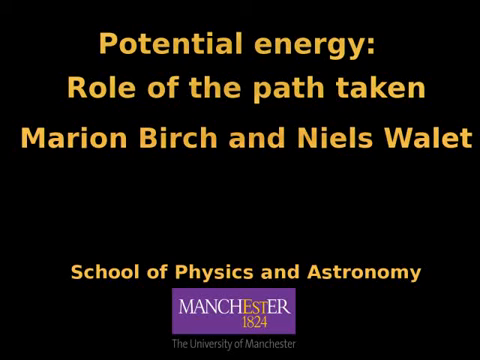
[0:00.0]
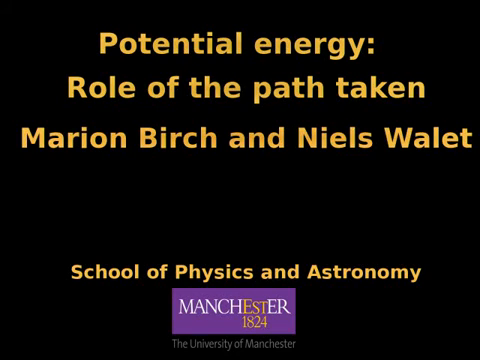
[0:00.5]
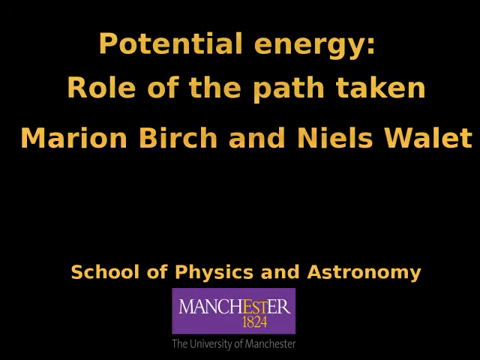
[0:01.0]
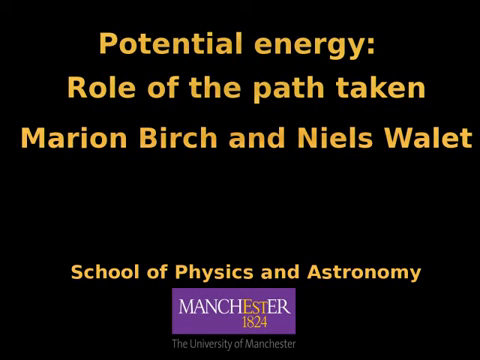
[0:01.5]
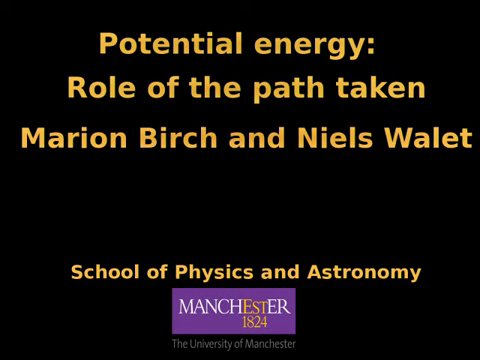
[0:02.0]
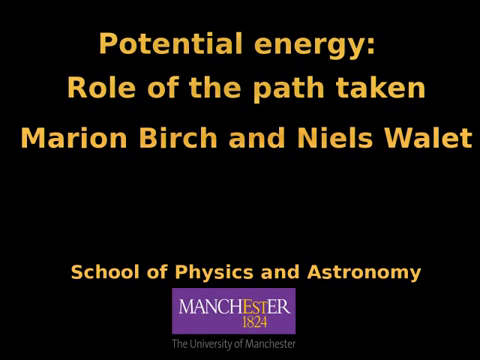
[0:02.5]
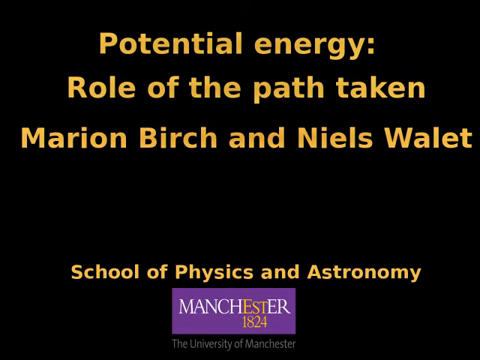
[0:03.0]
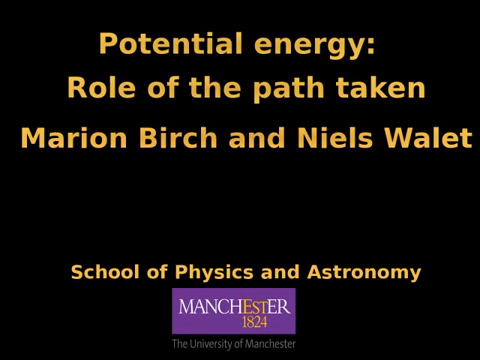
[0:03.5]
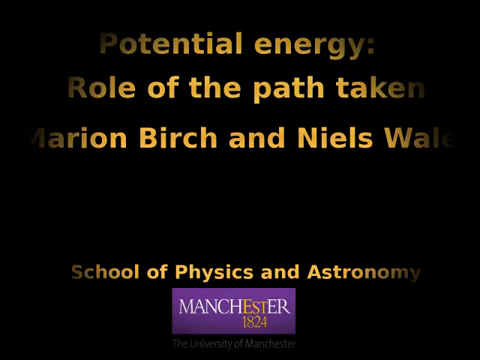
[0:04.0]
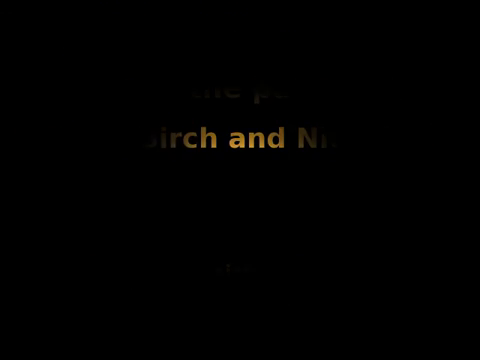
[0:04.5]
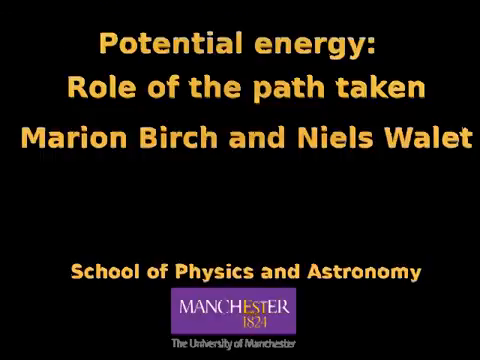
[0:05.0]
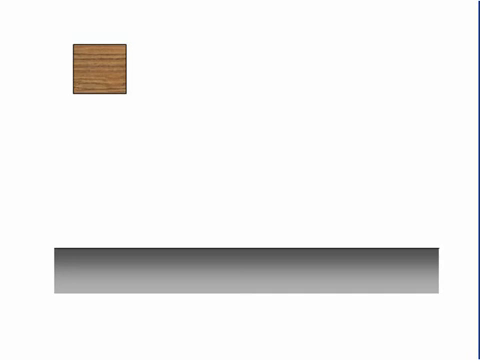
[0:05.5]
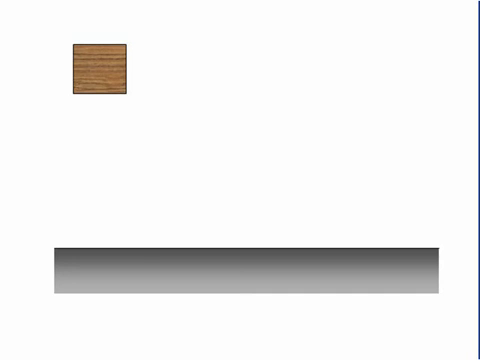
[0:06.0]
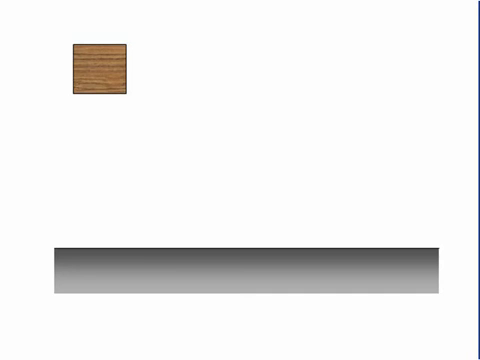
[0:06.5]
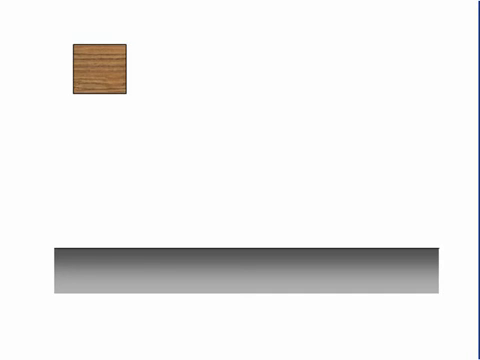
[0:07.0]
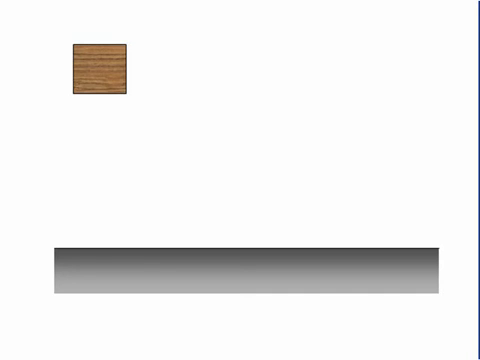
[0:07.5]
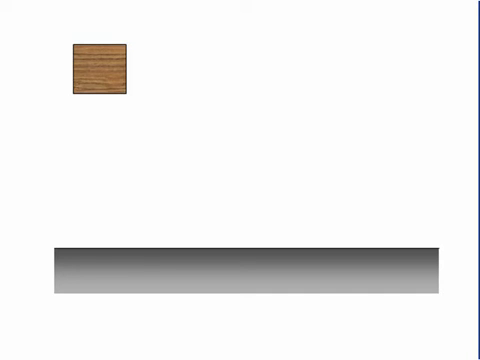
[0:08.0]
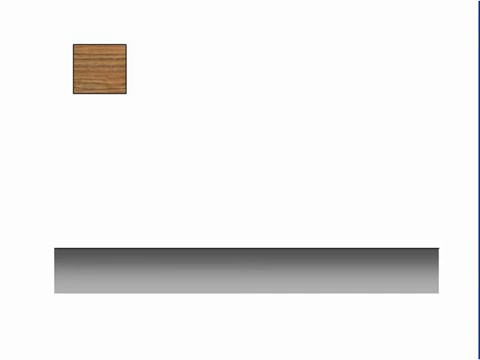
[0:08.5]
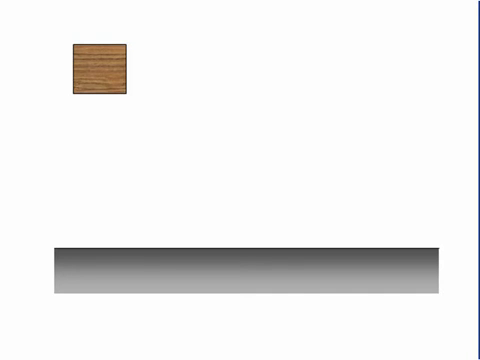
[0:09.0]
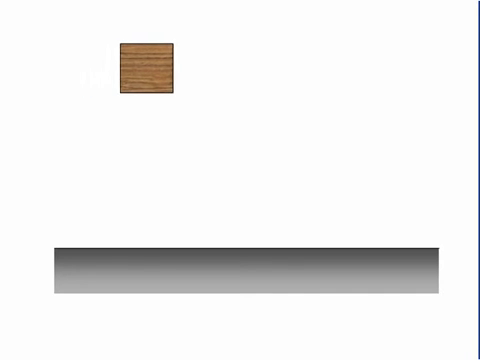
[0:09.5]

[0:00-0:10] A title page reads "Potential Energy: Role of the Path Taken" with the names "Marion Birch and Niels Walet". At the bottom is written "School of Physics and Astronomy", and "Manchester 1824" appears in a purple box; on it the other words are white, while "E.S.T." and "1824" are yellow. Next, a small box that looks like it is made of wood appears in the upper left corner, with a grey box at the bottom. The small wooden box moves from the top left corner to the far right. The round wooden box looks like a wooden tabletop.